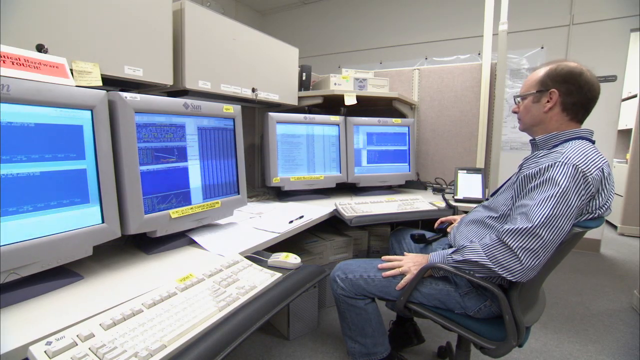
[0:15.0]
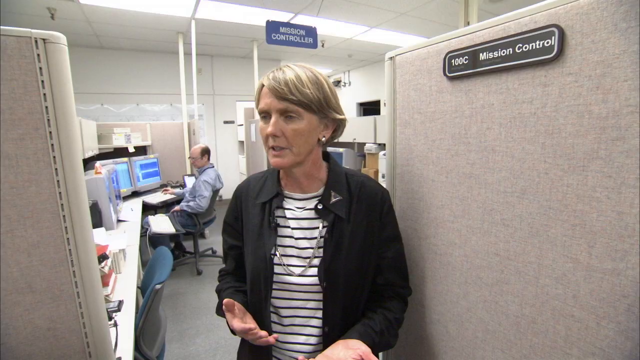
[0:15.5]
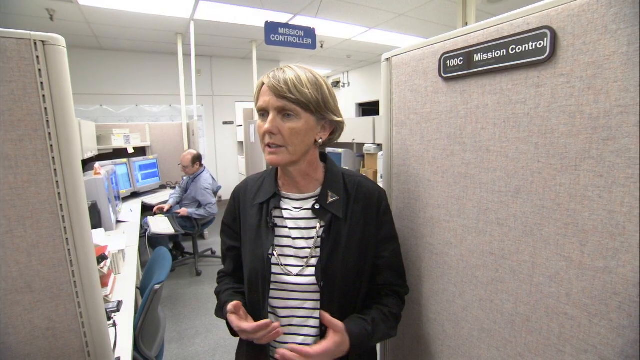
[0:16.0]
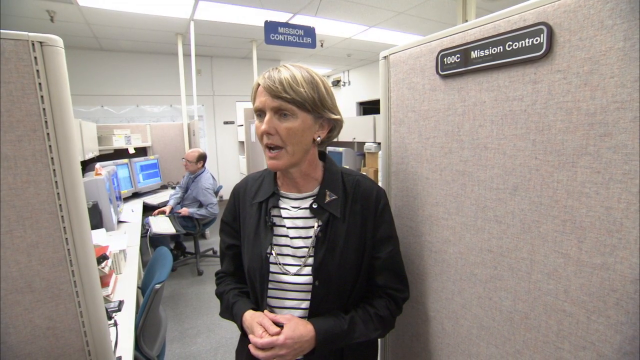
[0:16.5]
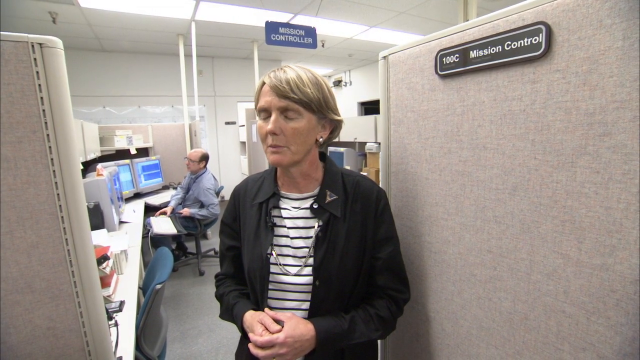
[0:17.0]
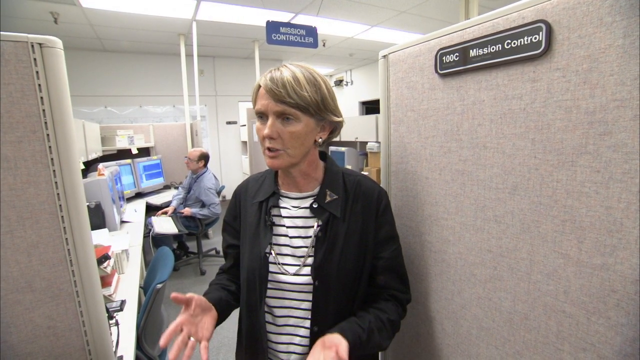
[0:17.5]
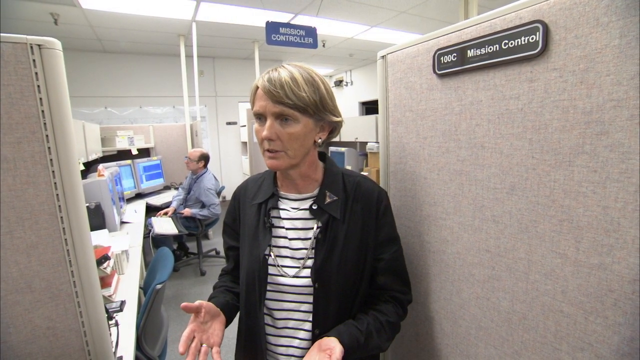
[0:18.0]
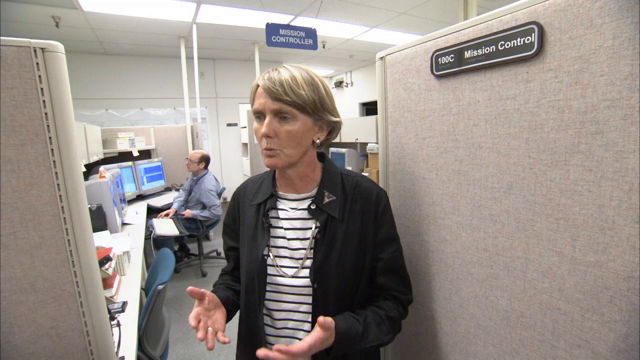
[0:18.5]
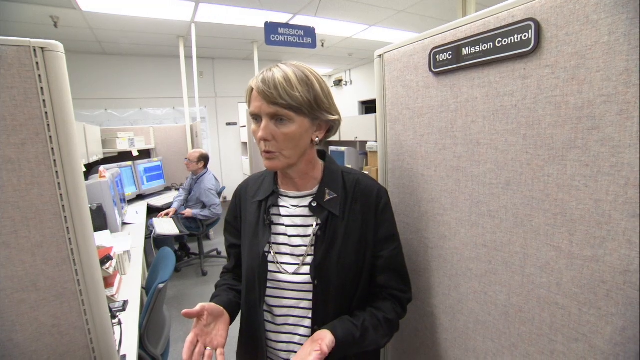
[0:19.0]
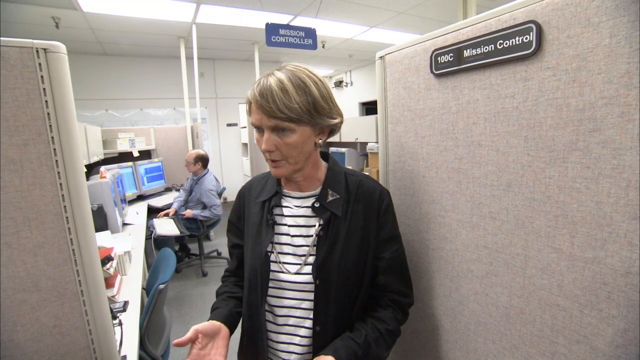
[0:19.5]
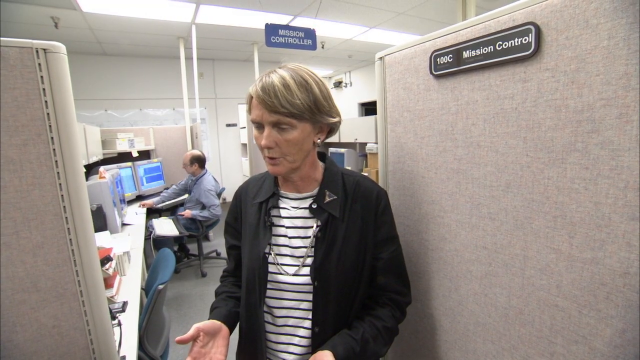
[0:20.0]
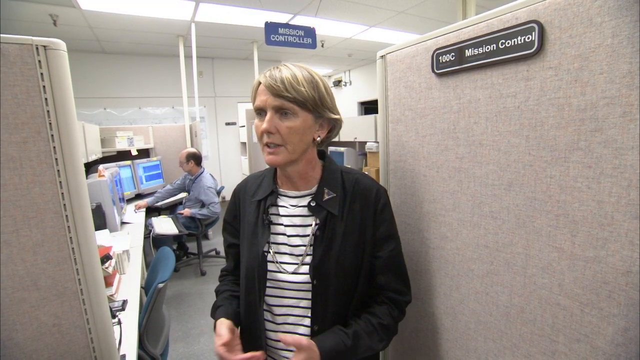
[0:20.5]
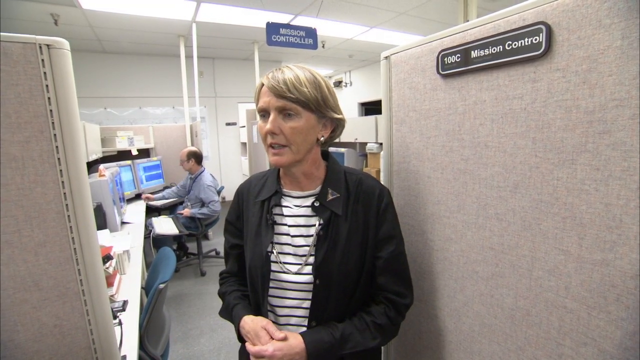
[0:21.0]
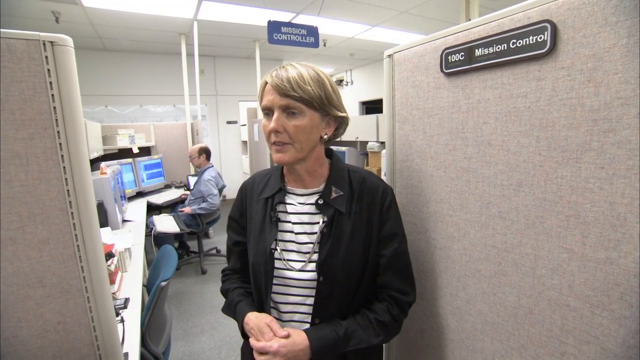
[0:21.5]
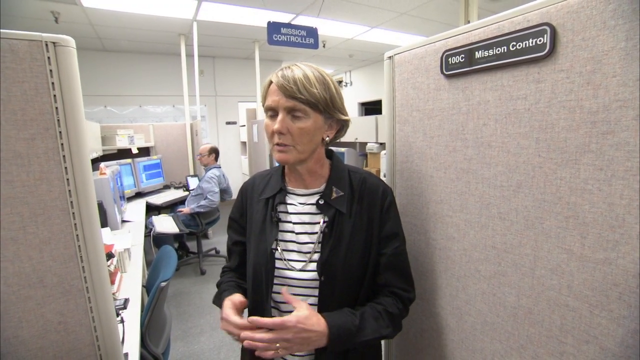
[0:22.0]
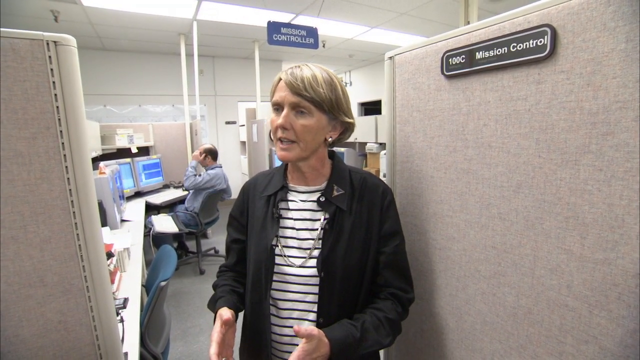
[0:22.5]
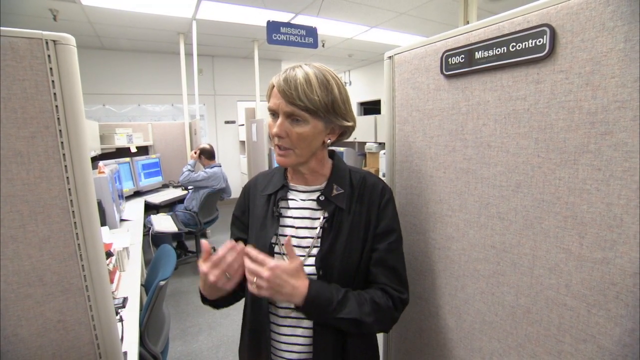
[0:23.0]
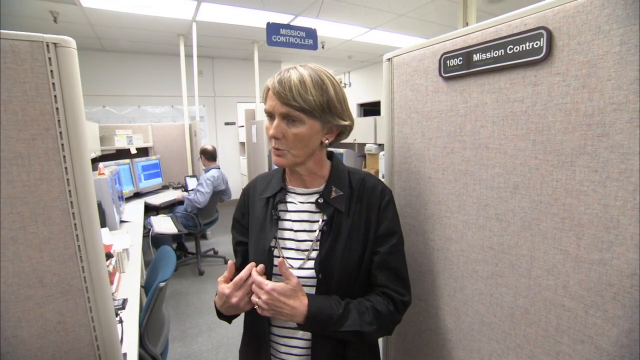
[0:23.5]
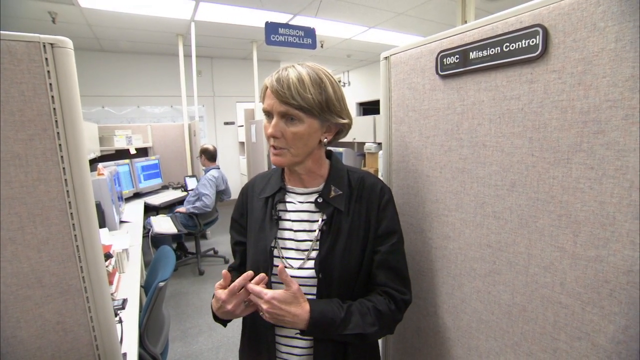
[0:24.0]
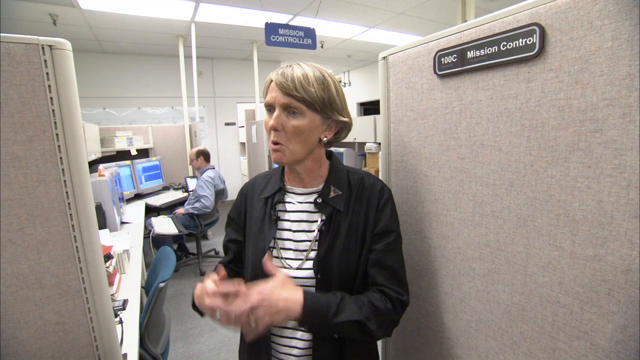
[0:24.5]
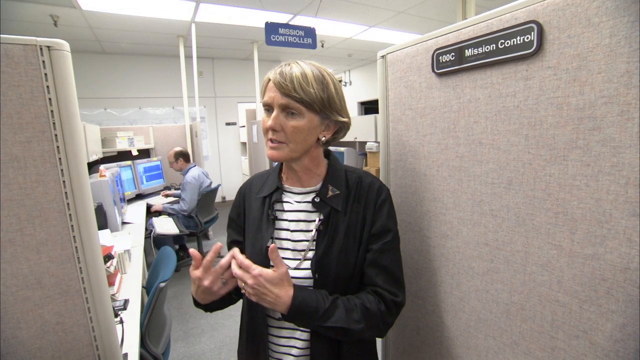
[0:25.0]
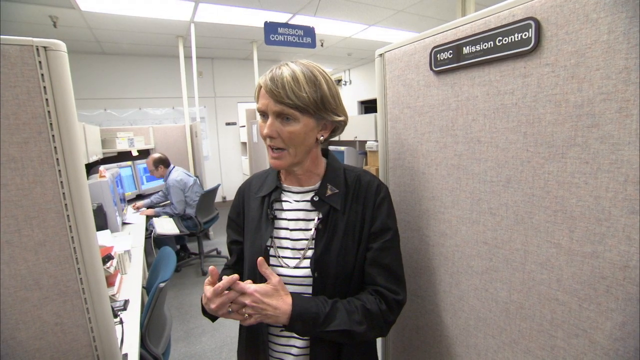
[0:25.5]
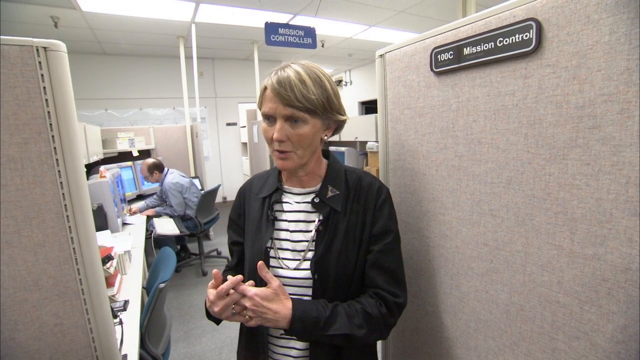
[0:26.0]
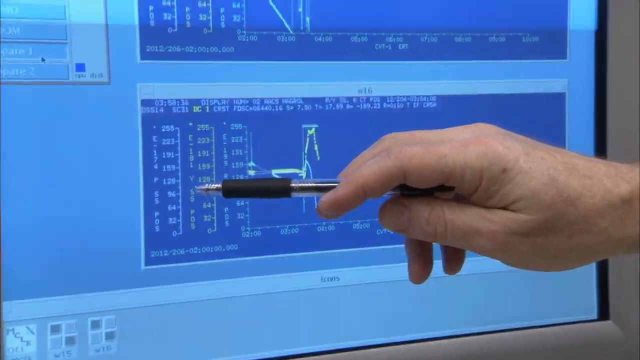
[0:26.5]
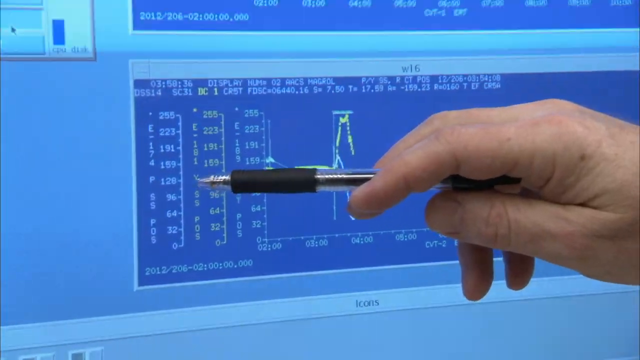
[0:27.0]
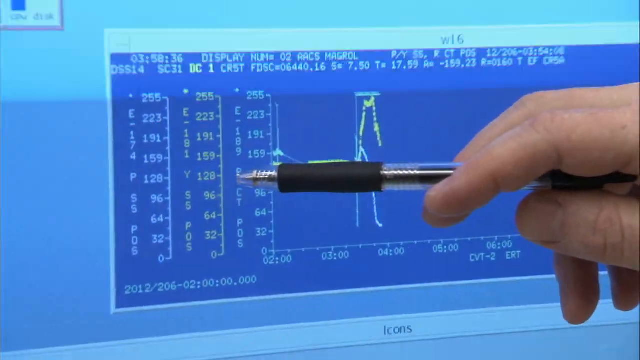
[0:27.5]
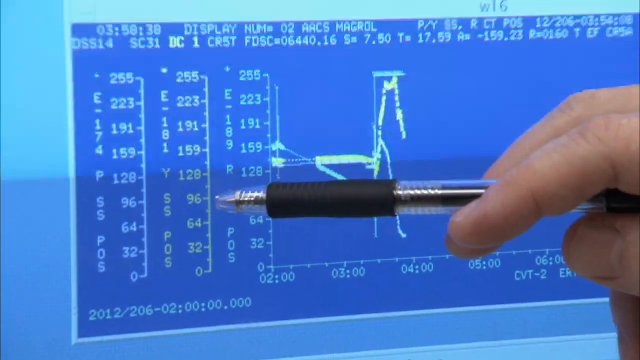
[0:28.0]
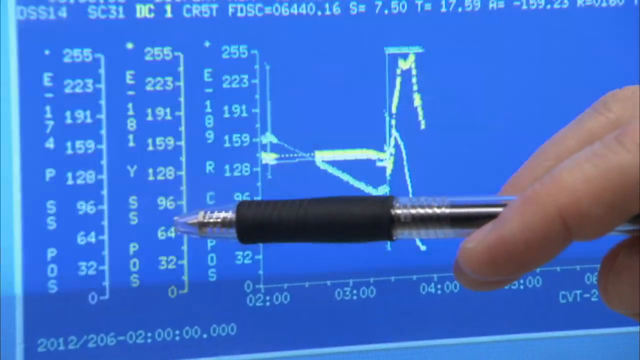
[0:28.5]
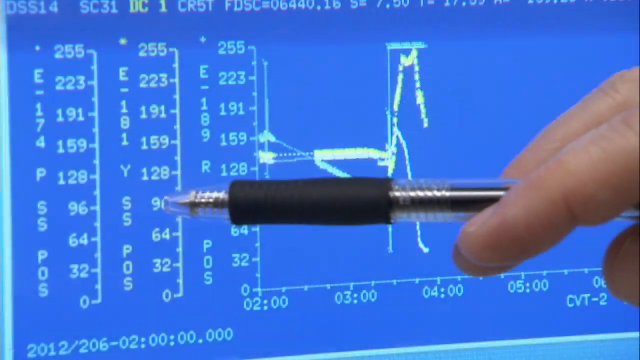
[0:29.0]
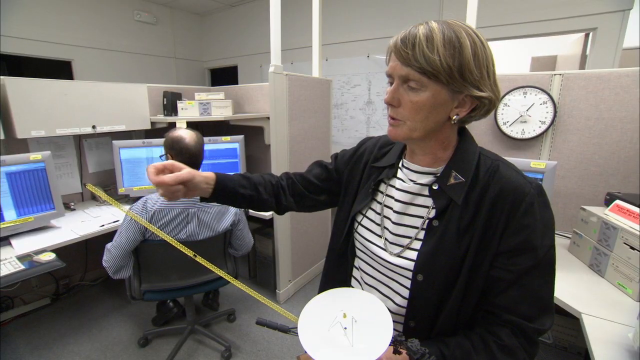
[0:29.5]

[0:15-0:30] A woman talks, wearing a black over shirt over a white undershirt with black horizontal stripes, a silver necklace and silver earrings. A blue and black chair is behind her. A close-up shows a computer screen with a very technical blue and gray interface full of numbers, and a man points to numbers on the screen with a black pen. There is a clock in the background and four computer screens. A yellow tape measure is shown, and a fire sprinkler system is built into the ceiling of the room.